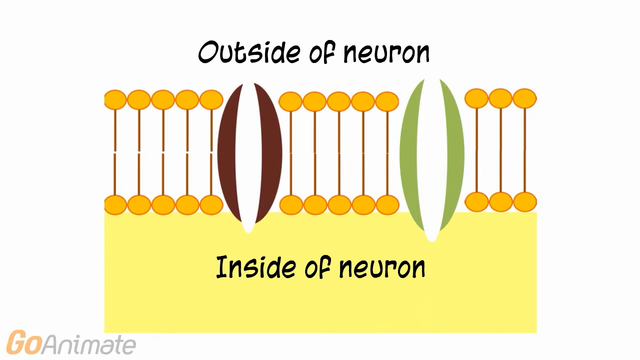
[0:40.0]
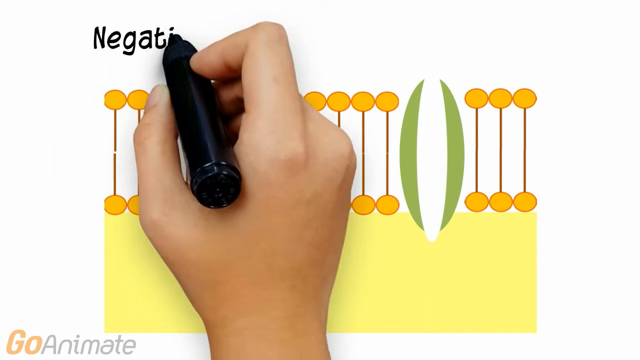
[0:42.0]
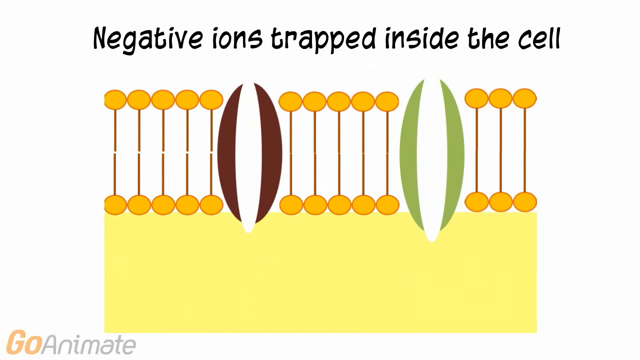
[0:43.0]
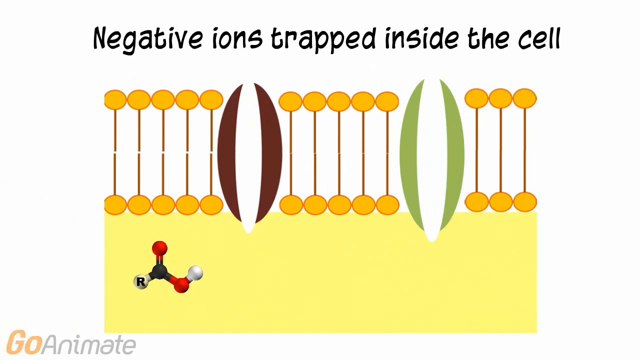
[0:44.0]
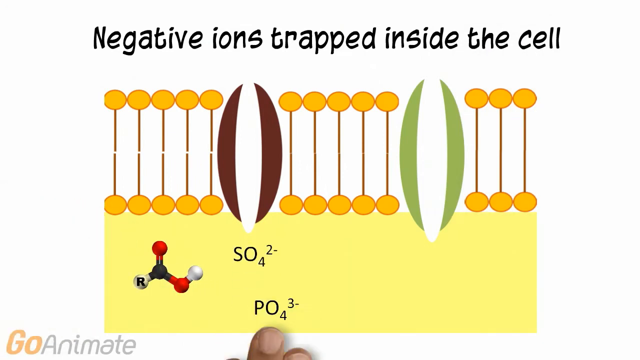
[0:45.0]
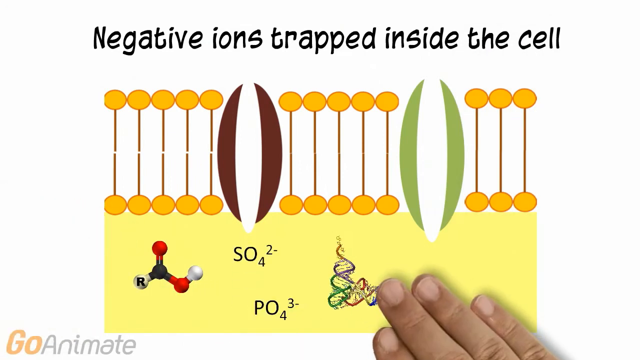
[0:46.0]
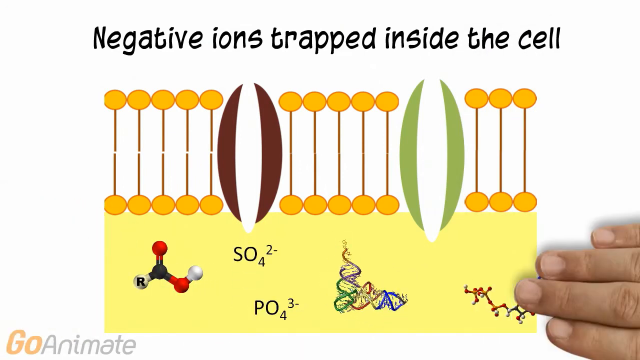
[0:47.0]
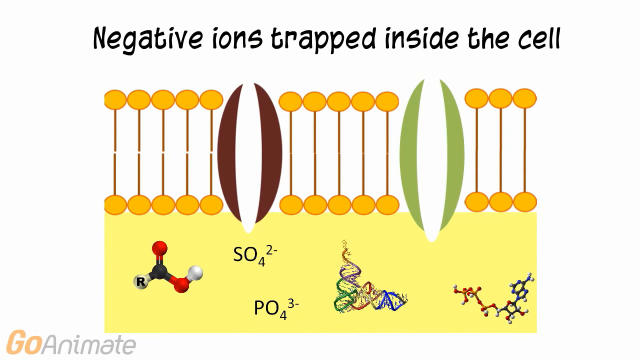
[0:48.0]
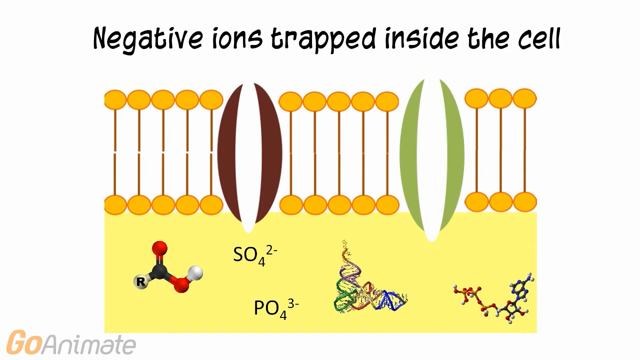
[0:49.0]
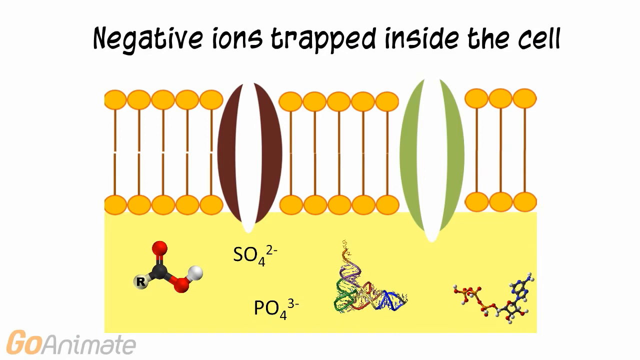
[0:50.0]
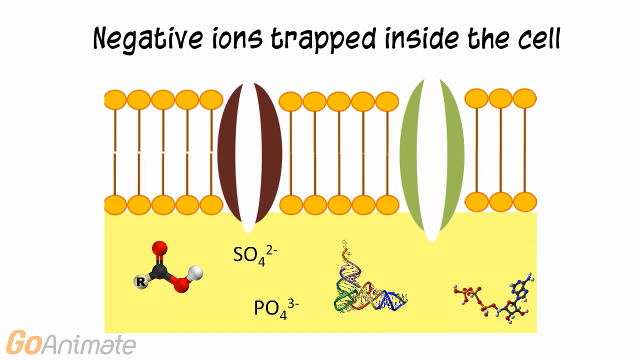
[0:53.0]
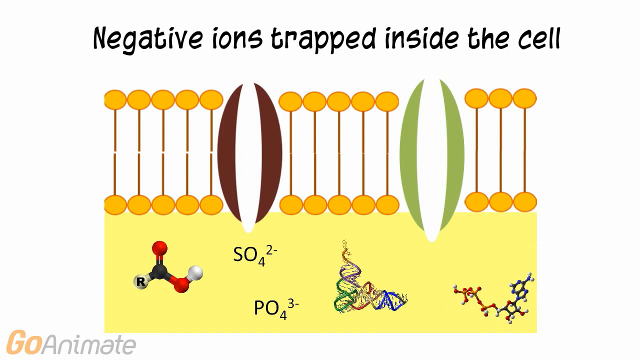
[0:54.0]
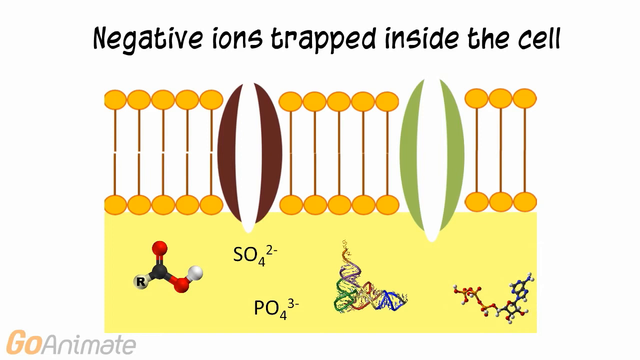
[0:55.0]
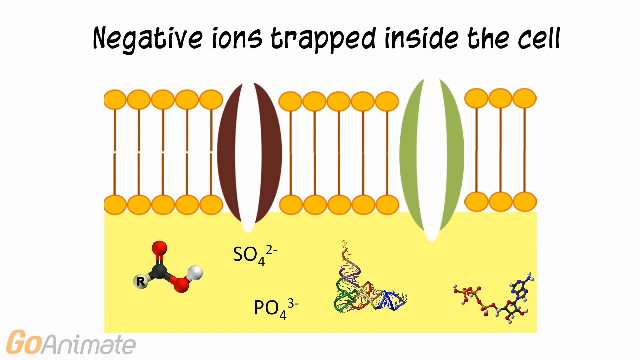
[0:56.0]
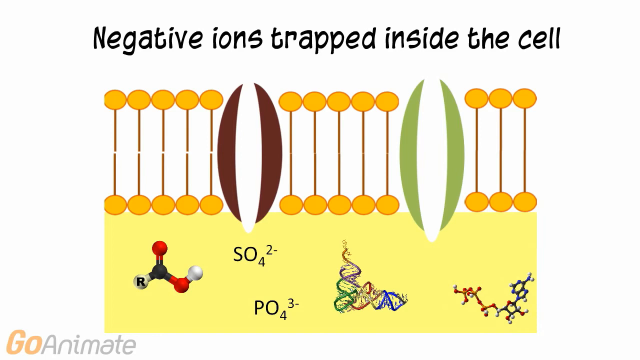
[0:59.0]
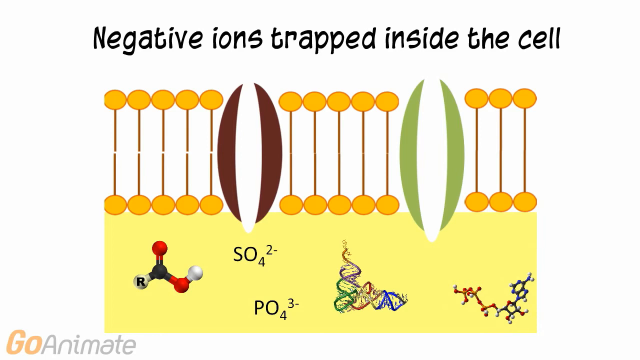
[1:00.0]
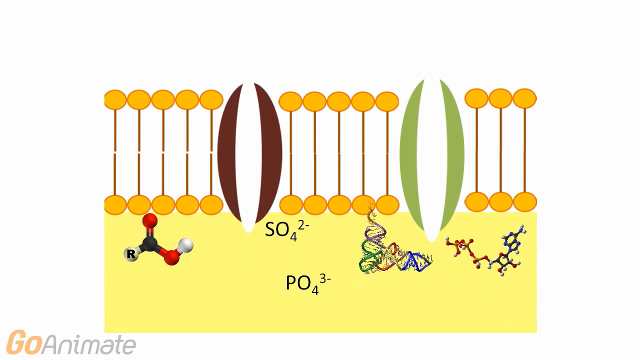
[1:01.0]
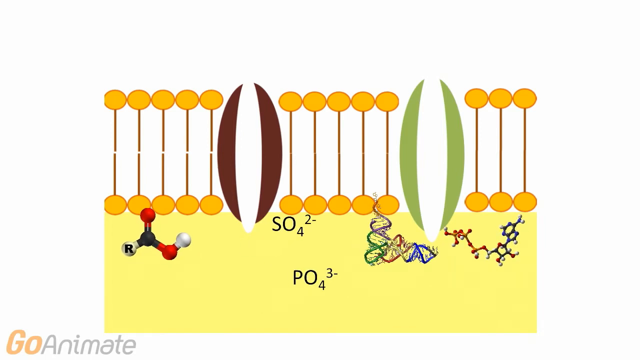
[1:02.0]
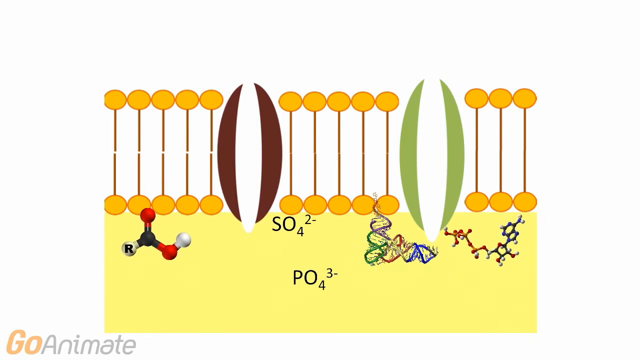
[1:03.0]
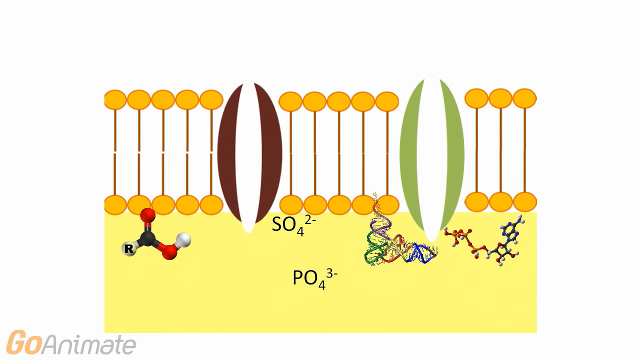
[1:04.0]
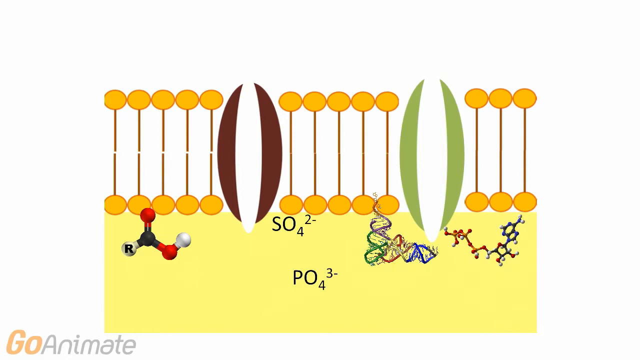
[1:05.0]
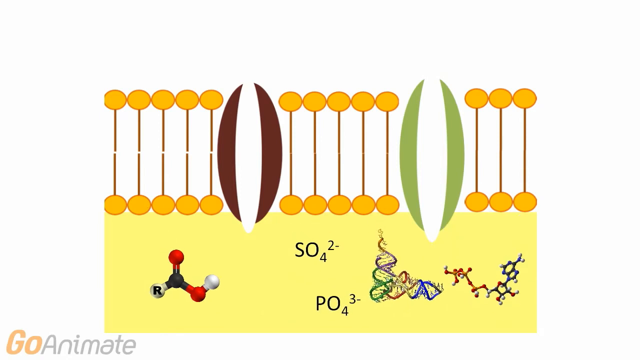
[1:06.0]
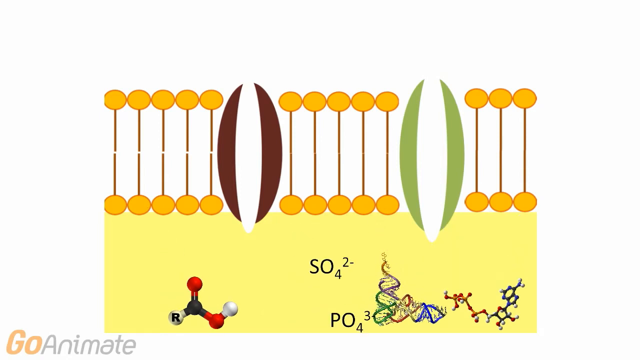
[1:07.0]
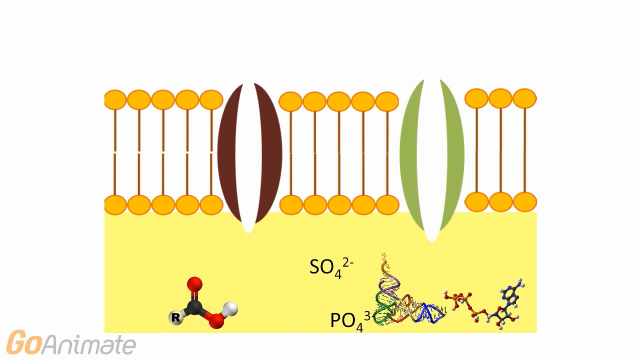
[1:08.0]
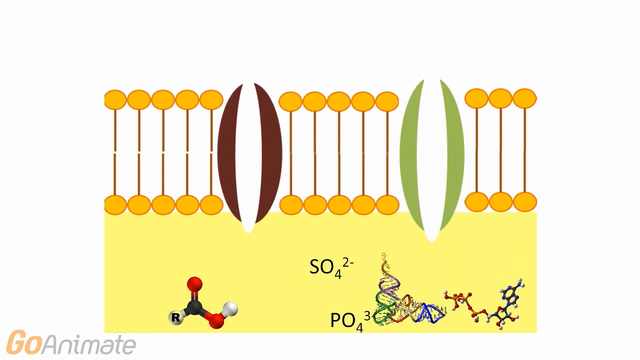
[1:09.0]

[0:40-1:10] A stylized drawing of a neuron shows a yellow rectangle at the bottom with two sets of five and one set of three vertical lines on top, each with oval shapes at either end. Between the sets are two parentheses-shaped objects, one with brown sides and one with green sides. Above it, handwriting reads "negative ions trapped inside the cell." The hand places several objects inside the yellow part of the drawing: on the far left, an image of an atom rendered in red, black, and white with the letter R on one side; then SO4 to the negative two power and PO4 to the negative three power; next to those, a stylized drawing of a DNA double helix; and beyond that, another drawing of molecules strung together. These objects shift position slightly, first moving up toward the top of the cell, then spreading out and moving further down. In the lower left-hand corner are the words "Go Animate."